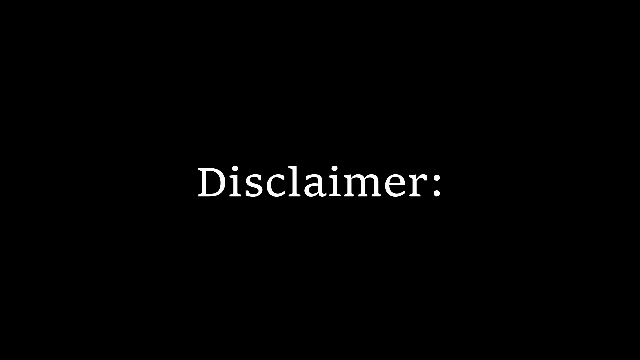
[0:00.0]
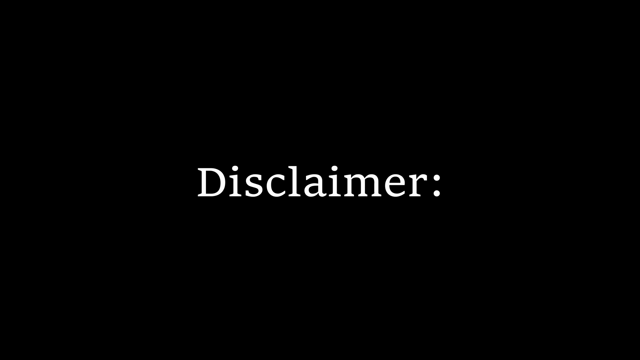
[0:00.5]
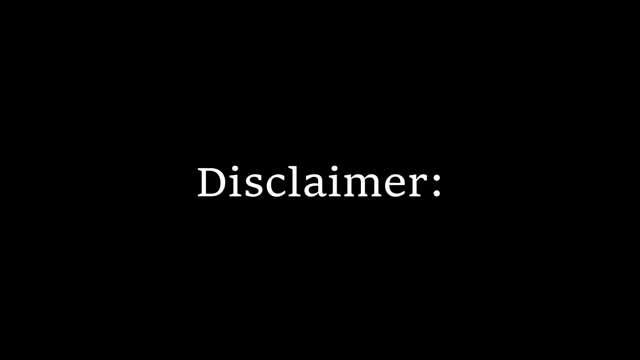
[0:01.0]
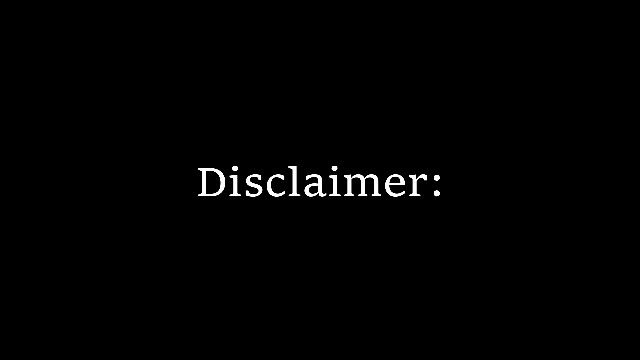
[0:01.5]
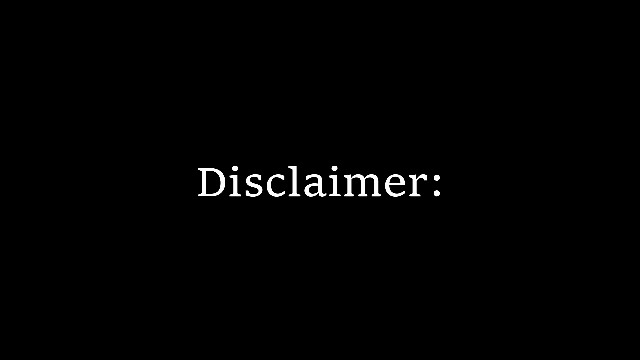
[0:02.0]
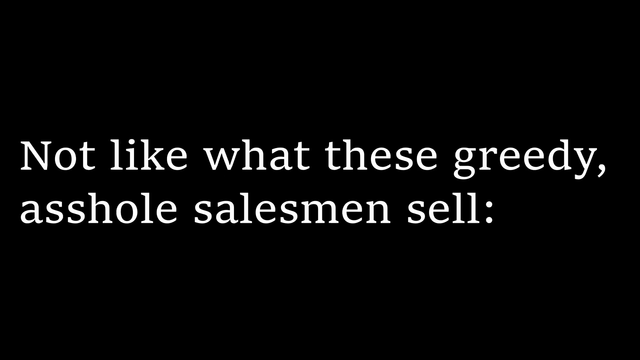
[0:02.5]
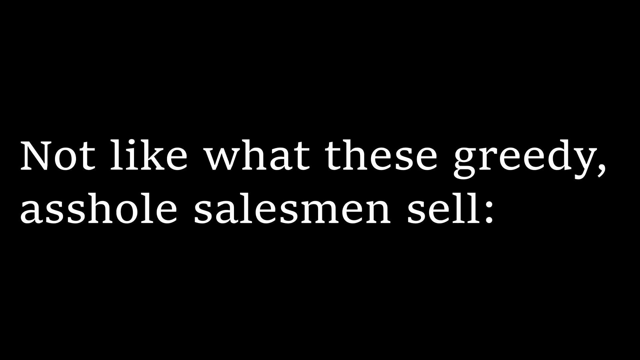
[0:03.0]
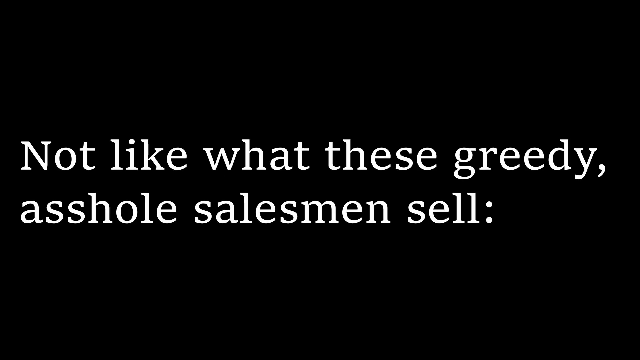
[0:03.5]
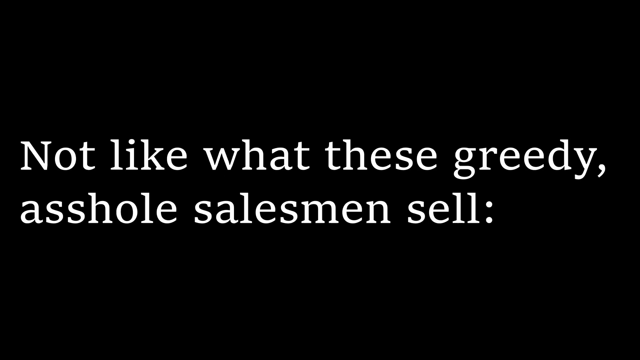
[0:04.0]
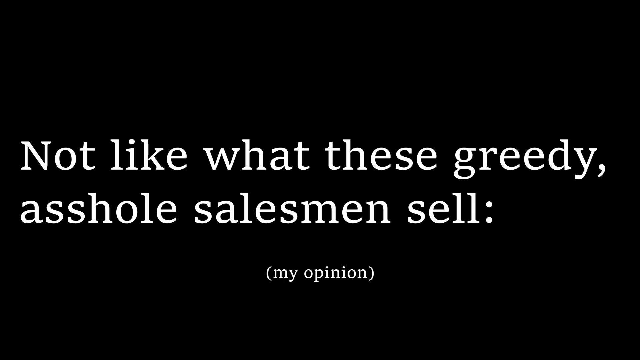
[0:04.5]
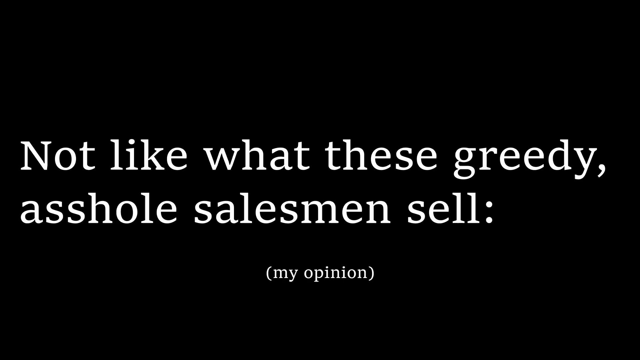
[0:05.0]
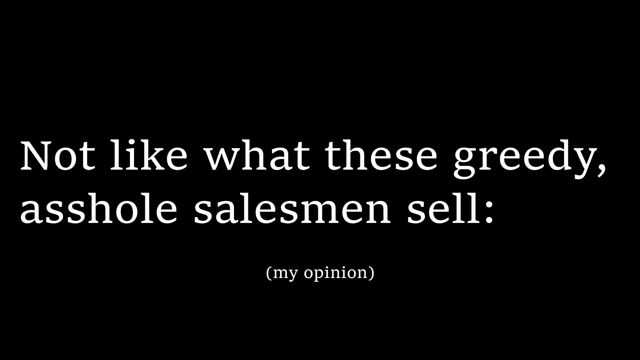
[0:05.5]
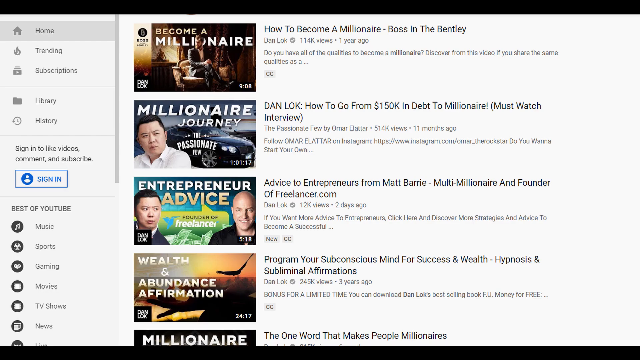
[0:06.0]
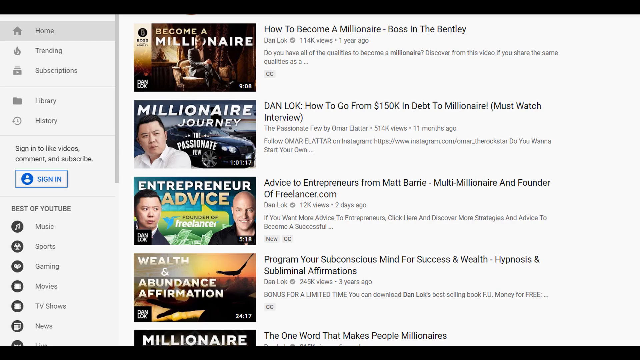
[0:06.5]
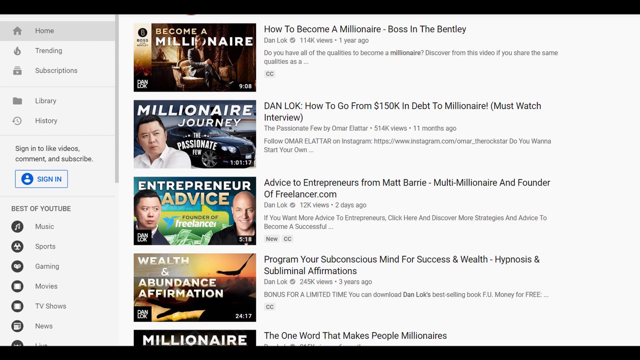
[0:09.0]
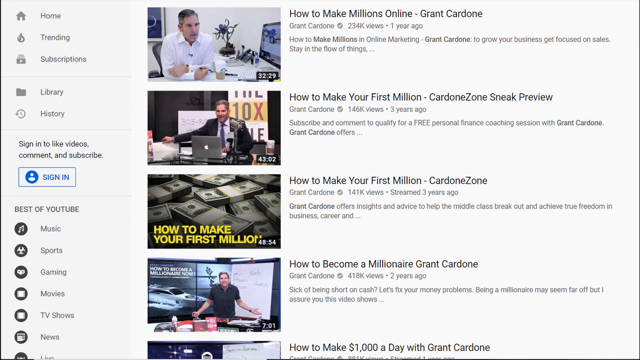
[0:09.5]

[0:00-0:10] A black background shows text in the middle that reads "Disclaimer: not like this greedy asshole salesman sell (my opinion)." Next comes a screenshot taken on YouTube: on a white background is a list of videos from a channel called The Passionate Film by Omar Elater, along with another channel called Dan Lok, whose thumbnail also features the character from the other channel. Another list follows, this one of different videos on how to make your first million, from a channel called Grand Cardone.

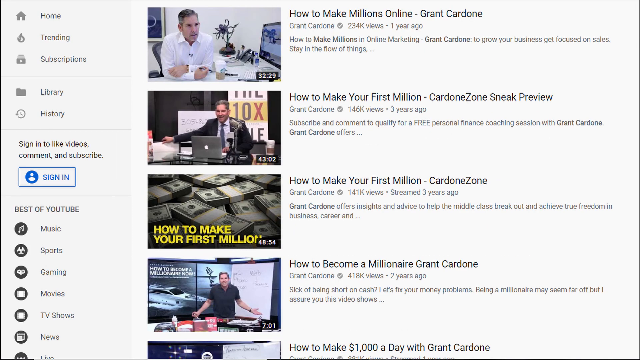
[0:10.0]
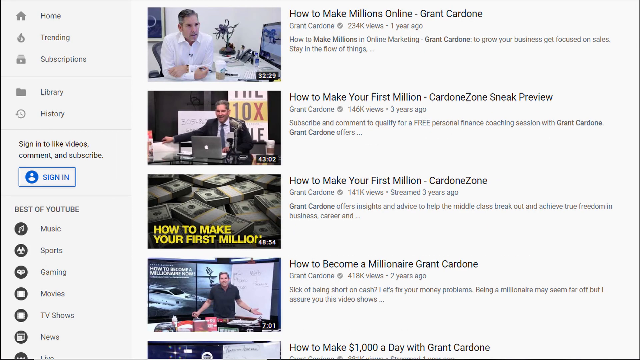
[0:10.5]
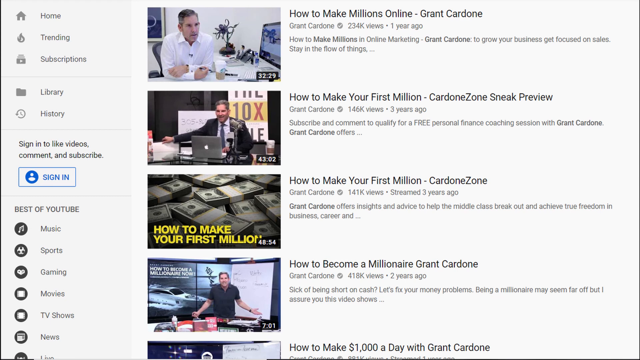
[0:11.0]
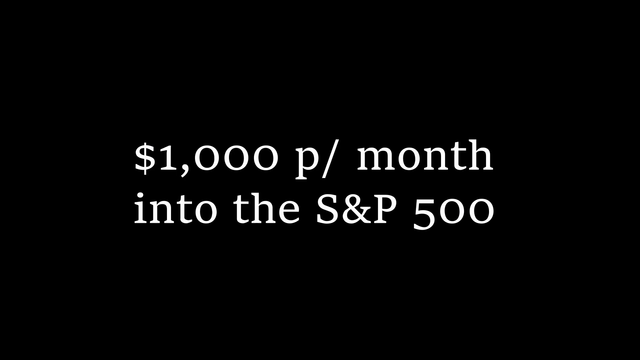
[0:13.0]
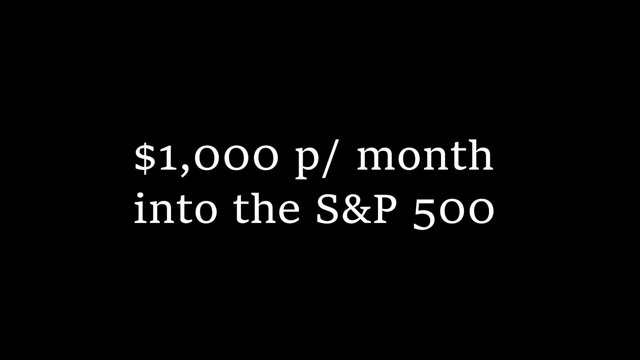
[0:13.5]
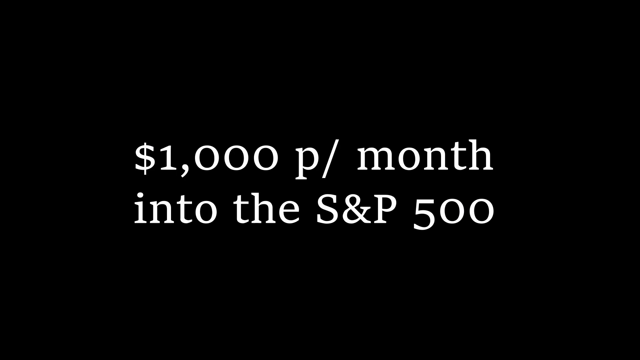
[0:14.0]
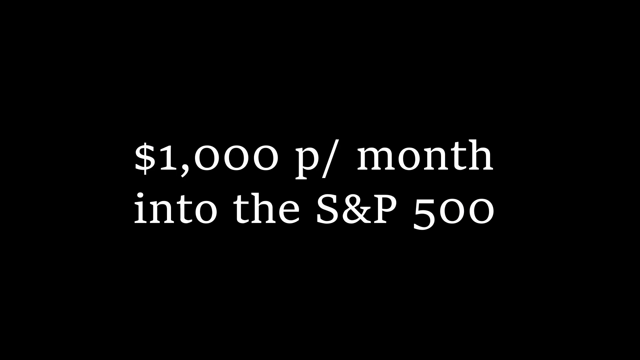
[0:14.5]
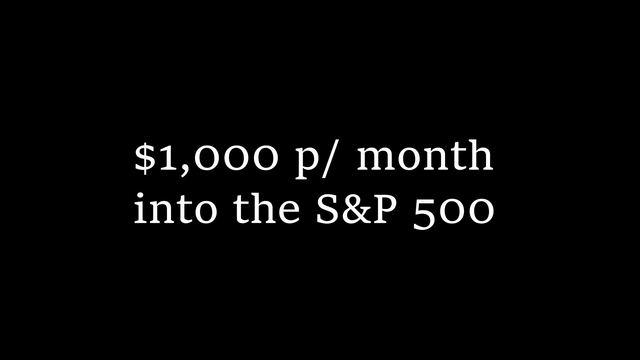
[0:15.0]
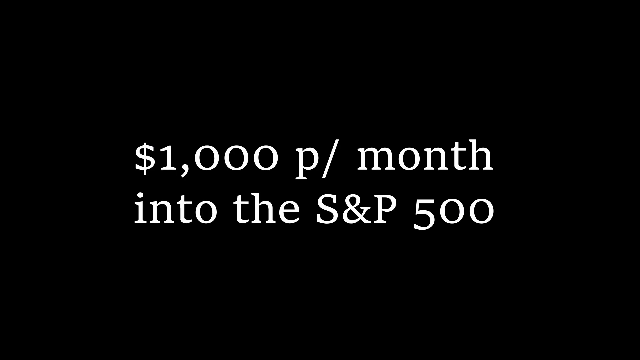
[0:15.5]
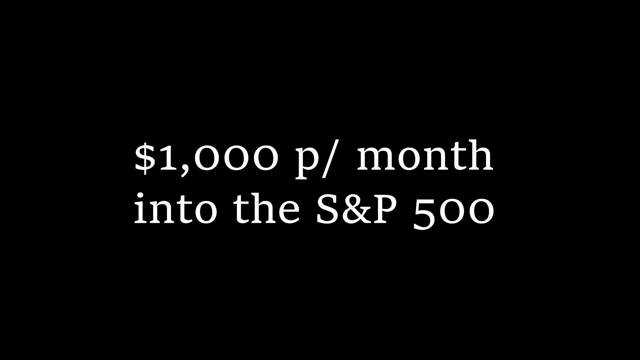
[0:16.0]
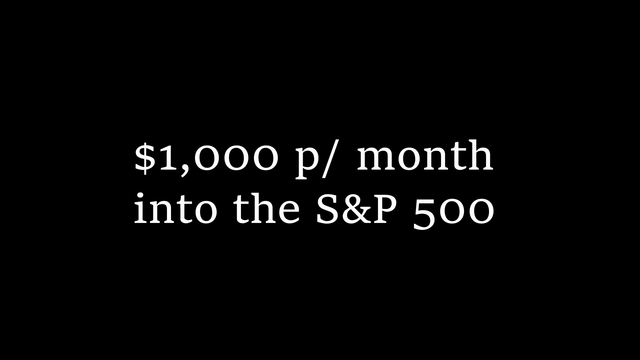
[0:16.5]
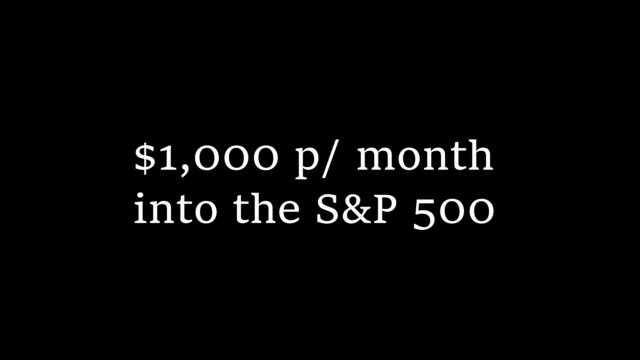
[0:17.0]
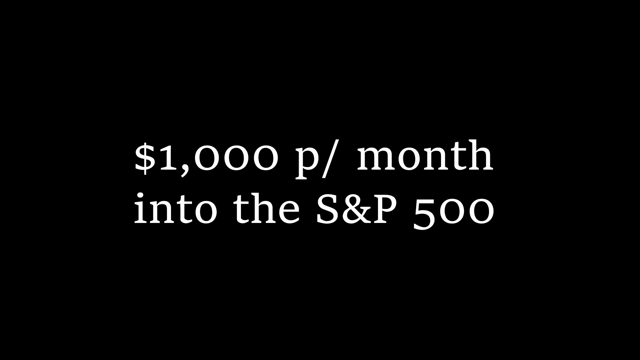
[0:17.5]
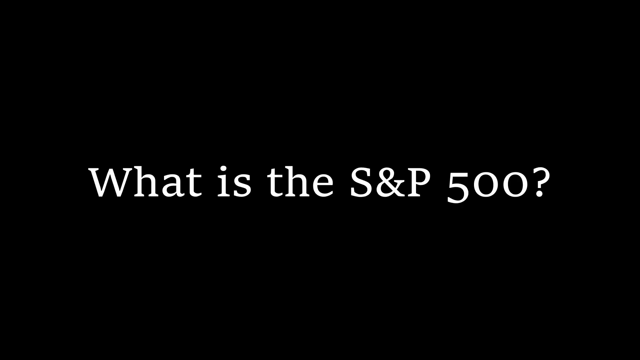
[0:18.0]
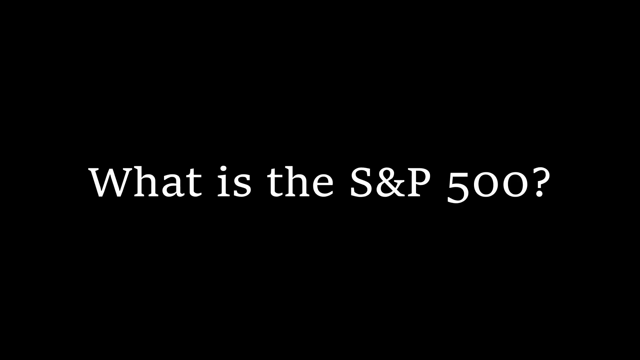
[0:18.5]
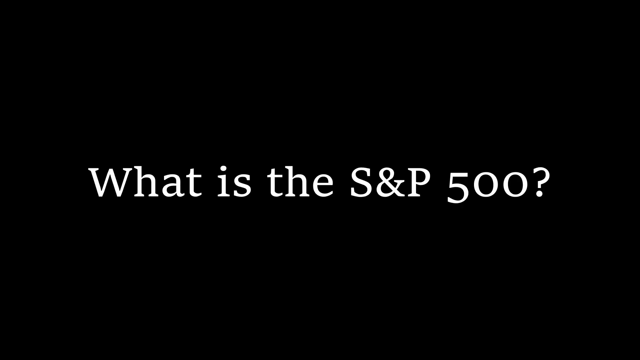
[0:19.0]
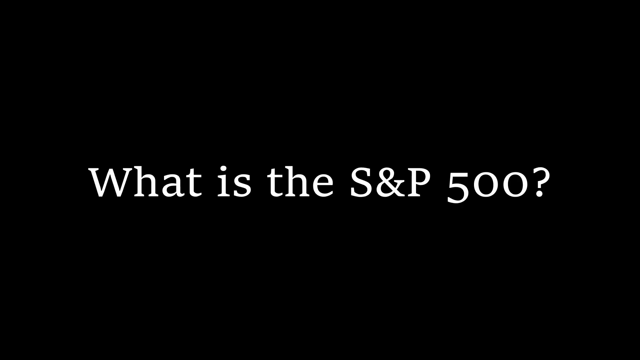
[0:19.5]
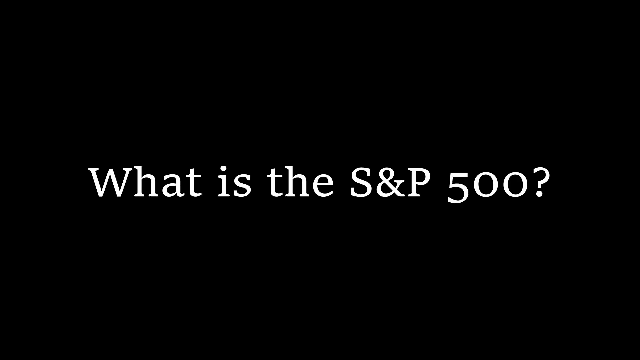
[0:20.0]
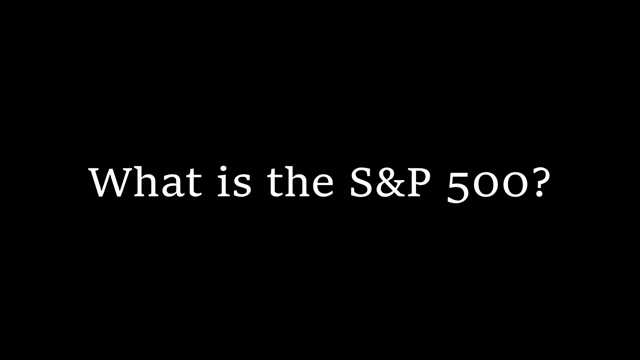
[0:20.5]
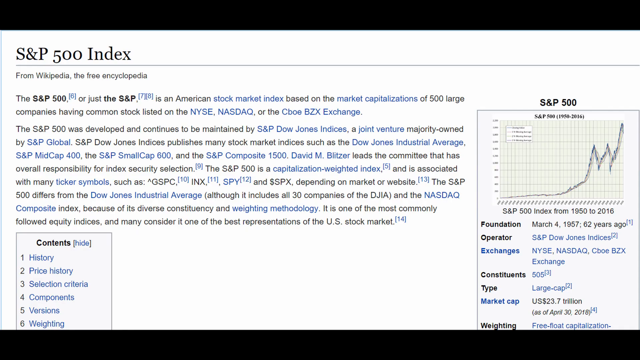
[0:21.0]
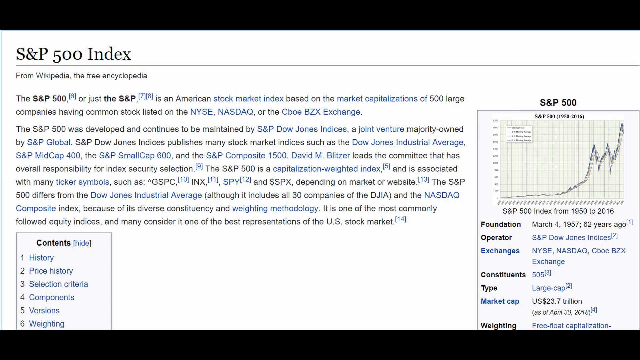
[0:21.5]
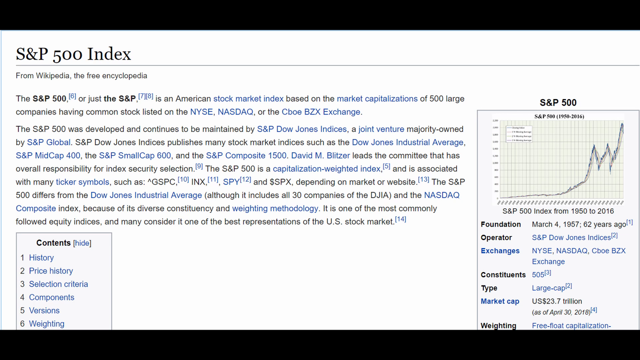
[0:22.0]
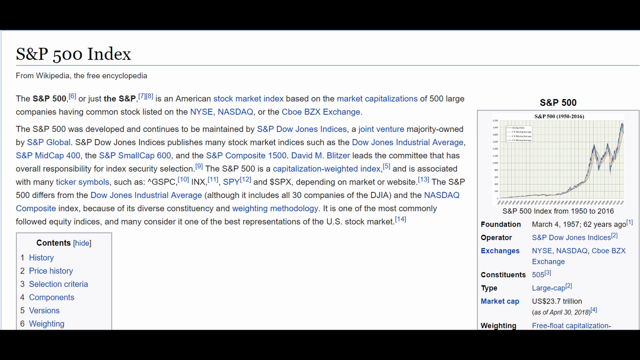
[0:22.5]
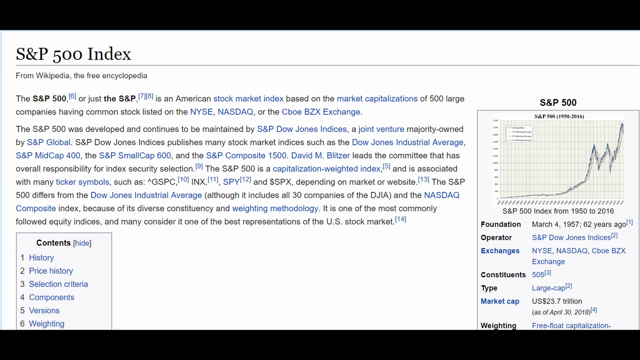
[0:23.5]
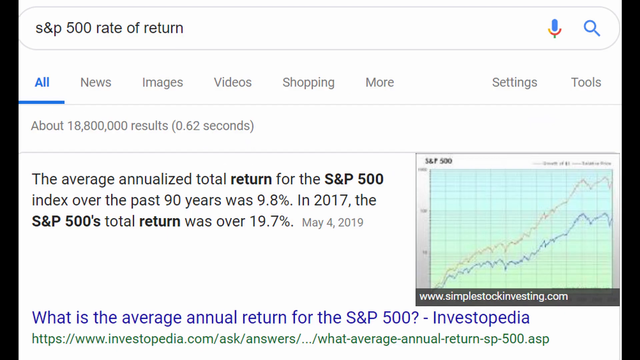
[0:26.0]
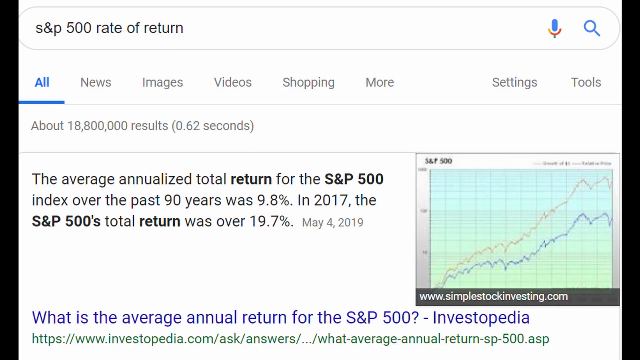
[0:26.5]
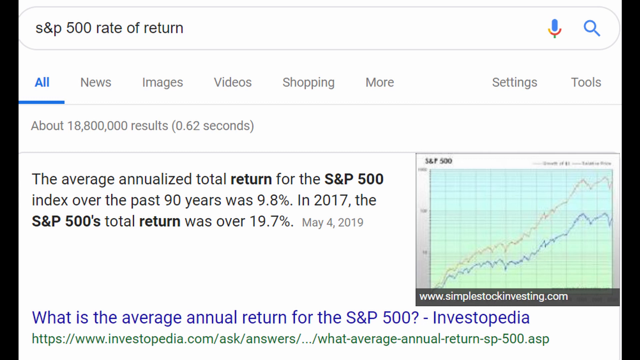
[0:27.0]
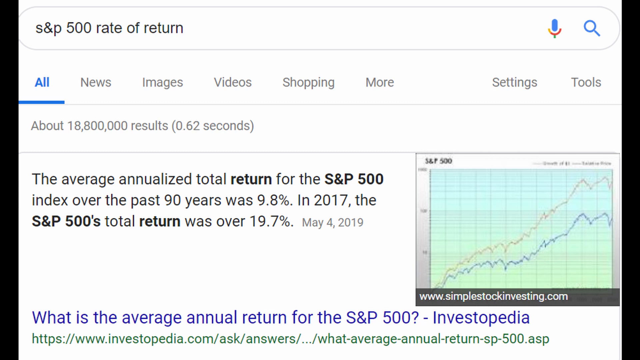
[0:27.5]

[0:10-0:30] The same list of videos remains on screen, with titles about how to make your first million or your first millions online. They all seem to come from the same channel, Grant Cardone. Text then appears on the screen reading "$1,000 per month invested in the S&P 500," followed by the question "What is the S&P 500?" Next is a screenshot of a Wikipedia page about the S&P 500 Index. It describes the index as "an American stock market index based on the market capitalizations of 500 large companies having common stock listed on the NYSE, NASDAQ, or the Cboe BZX exchange." The page also gives an average total return for the index over the past 90 years of 9.8%, and a 2017 total return of over 19.7%.